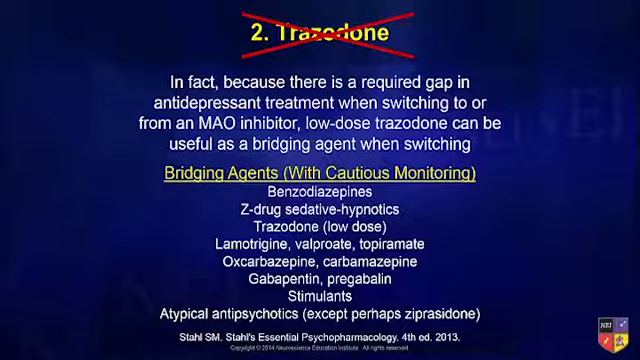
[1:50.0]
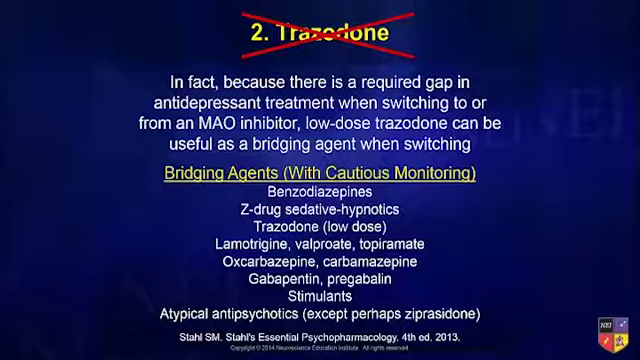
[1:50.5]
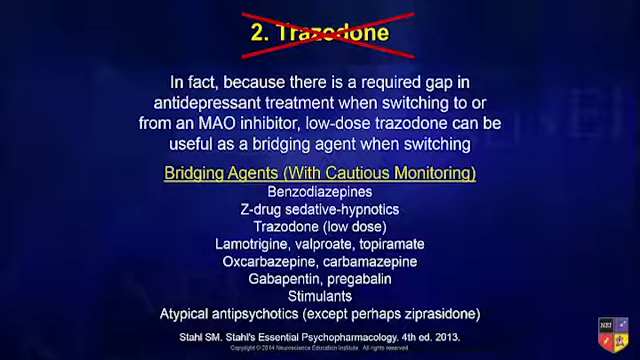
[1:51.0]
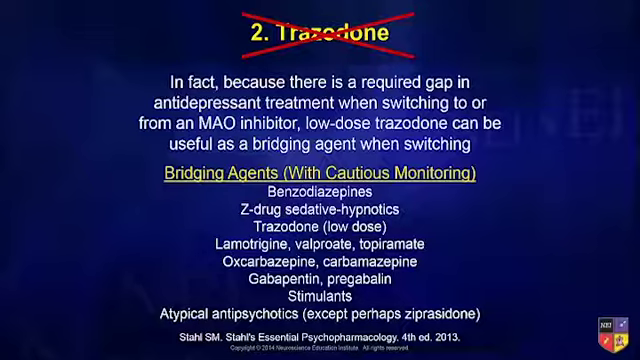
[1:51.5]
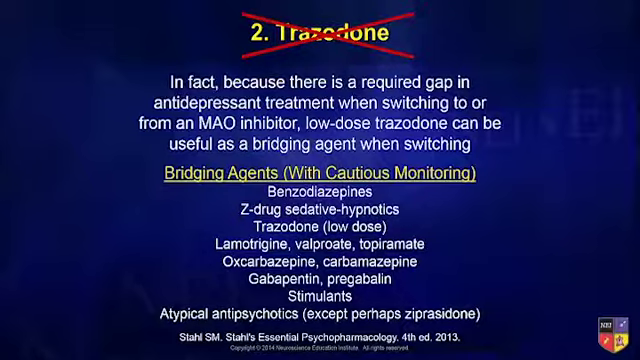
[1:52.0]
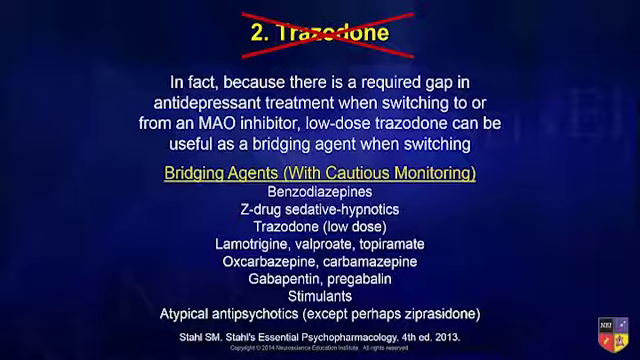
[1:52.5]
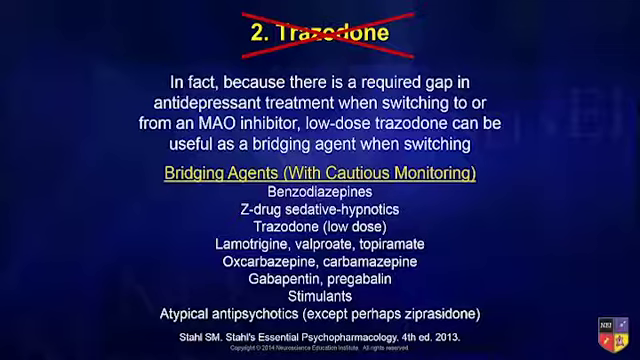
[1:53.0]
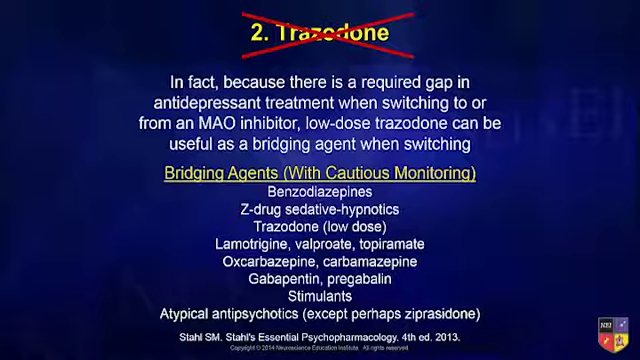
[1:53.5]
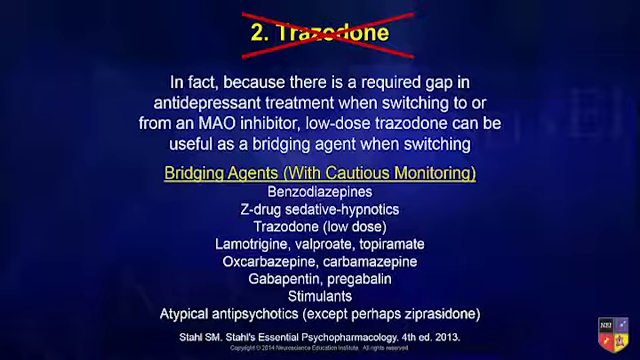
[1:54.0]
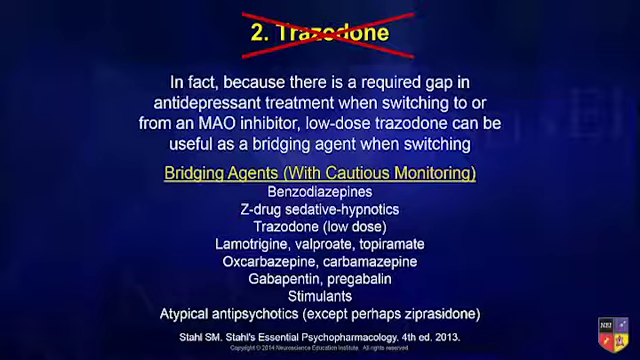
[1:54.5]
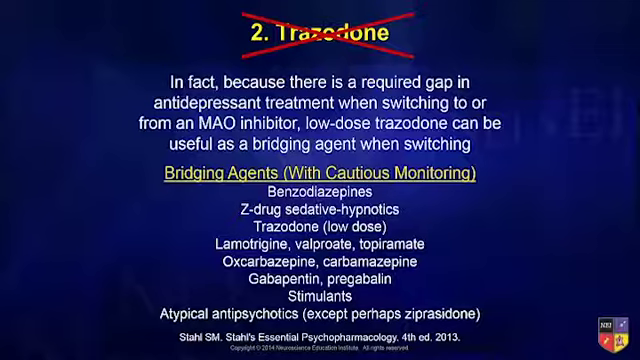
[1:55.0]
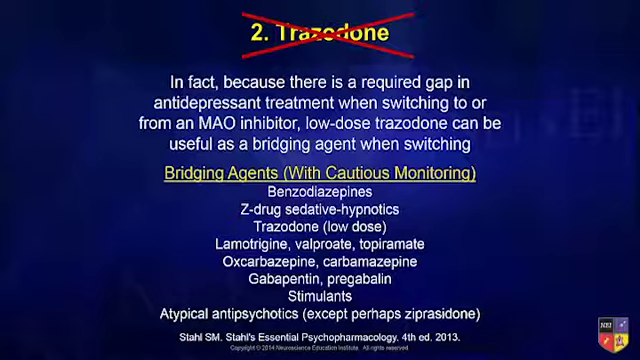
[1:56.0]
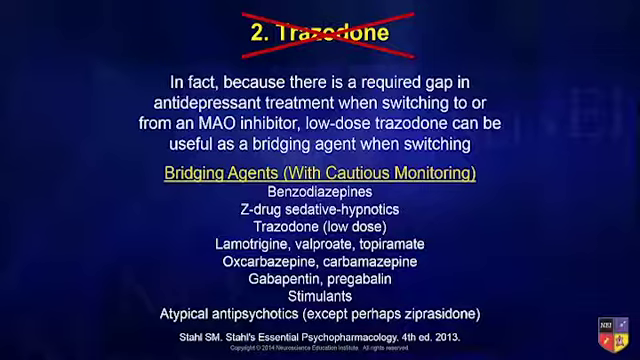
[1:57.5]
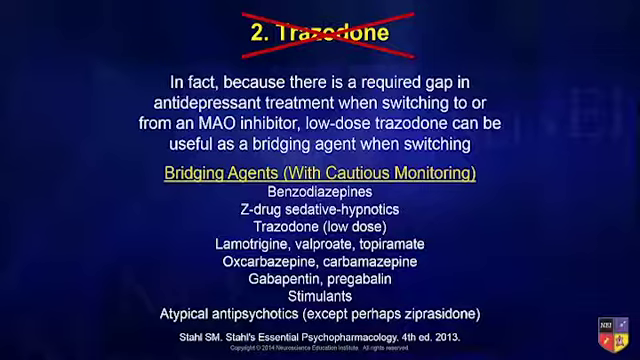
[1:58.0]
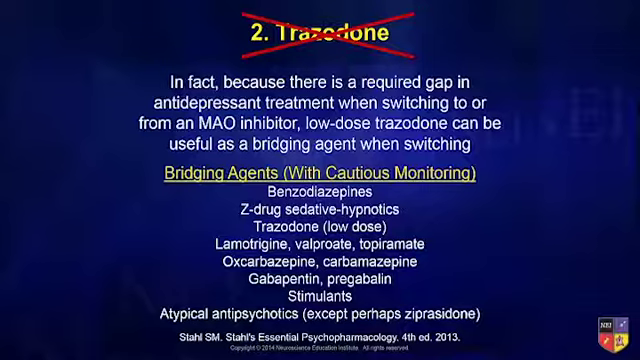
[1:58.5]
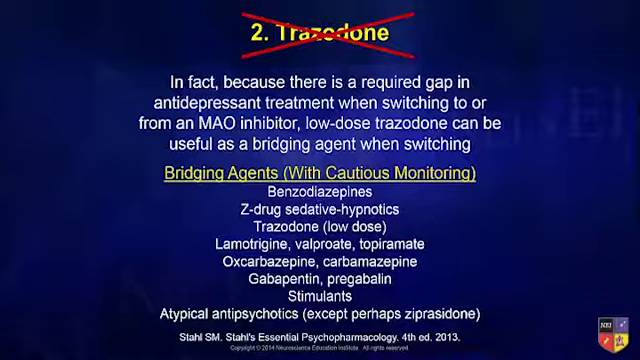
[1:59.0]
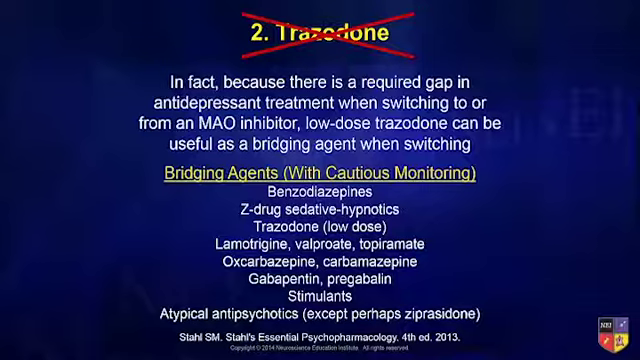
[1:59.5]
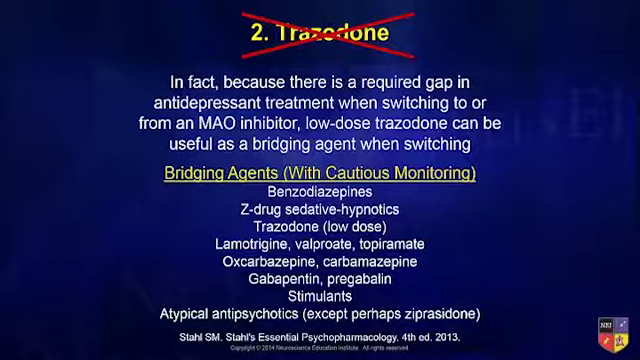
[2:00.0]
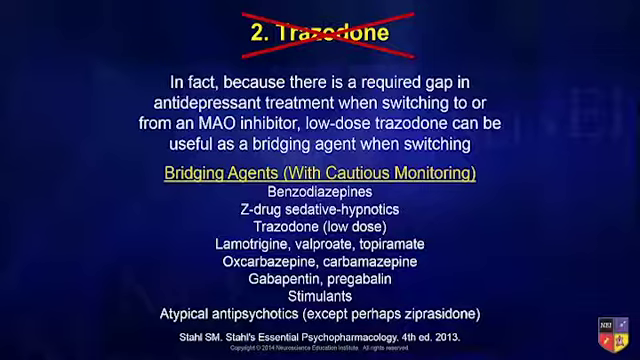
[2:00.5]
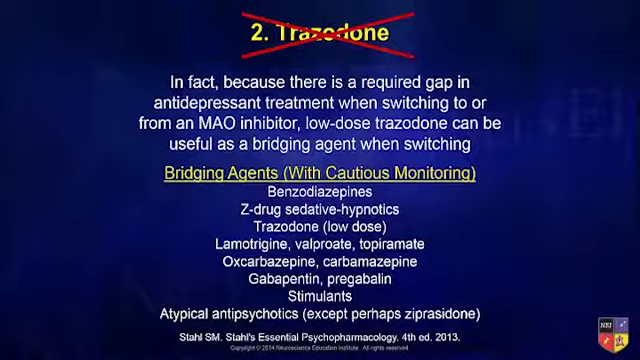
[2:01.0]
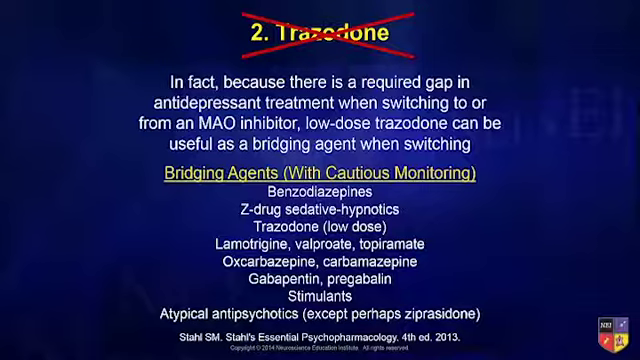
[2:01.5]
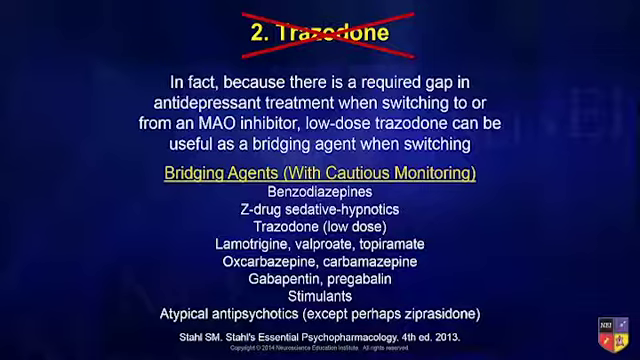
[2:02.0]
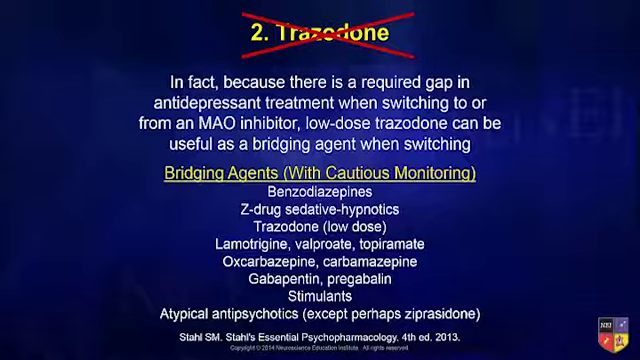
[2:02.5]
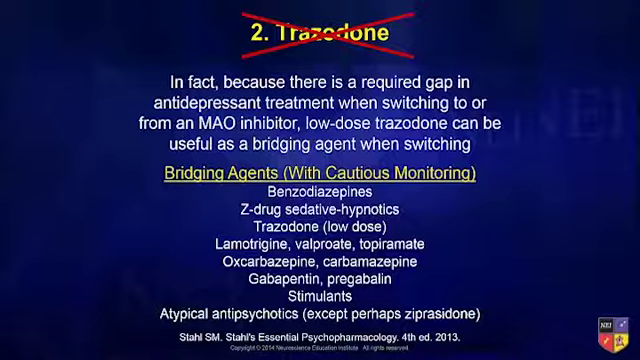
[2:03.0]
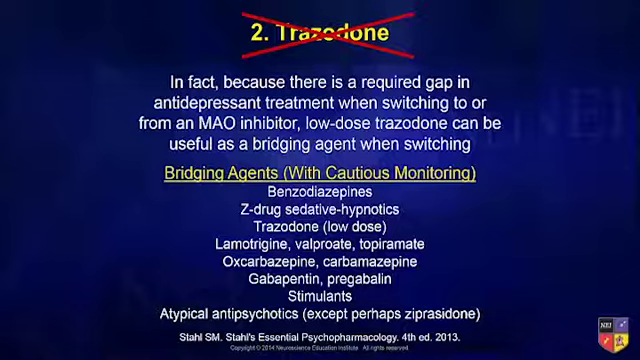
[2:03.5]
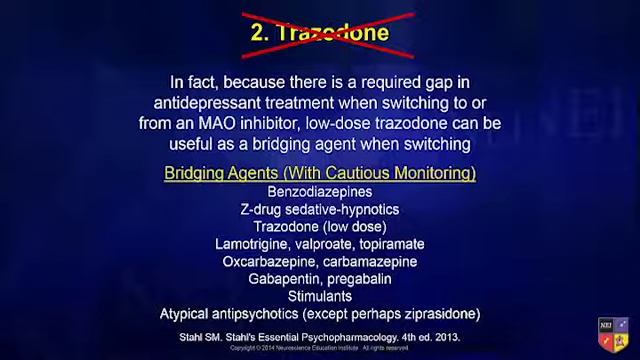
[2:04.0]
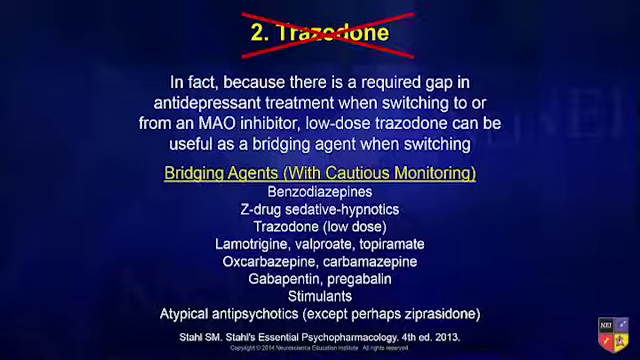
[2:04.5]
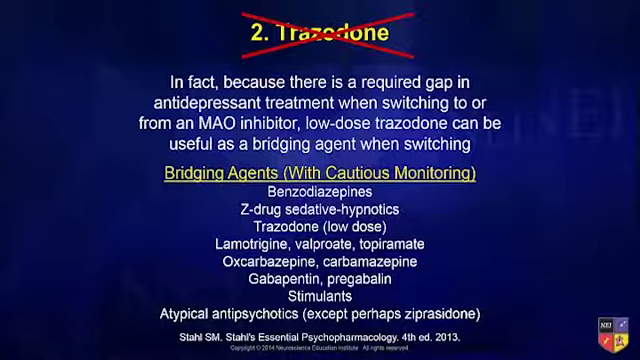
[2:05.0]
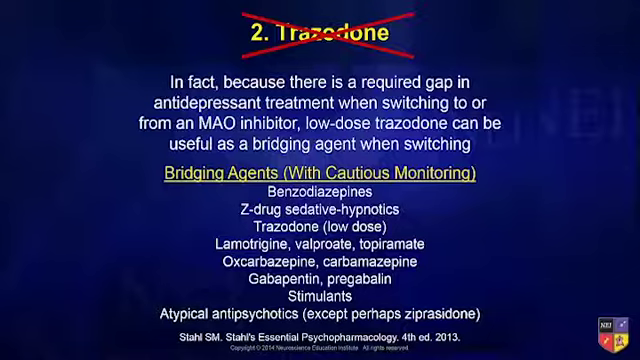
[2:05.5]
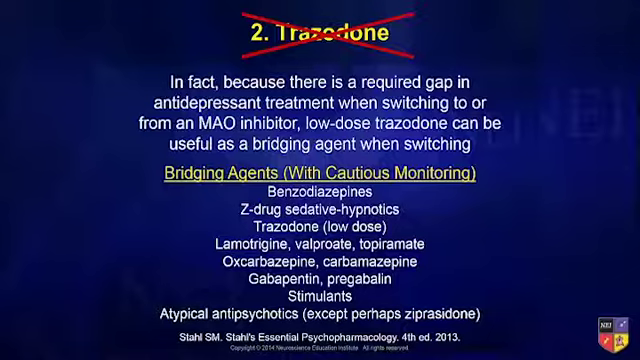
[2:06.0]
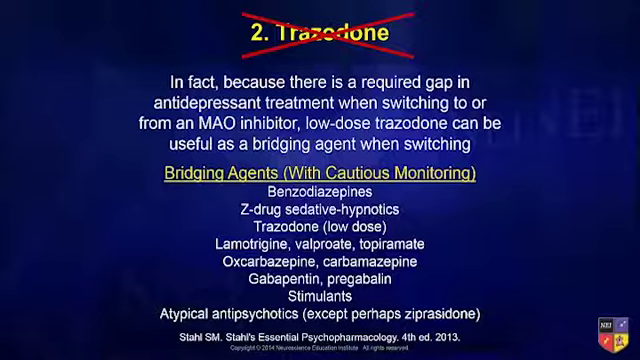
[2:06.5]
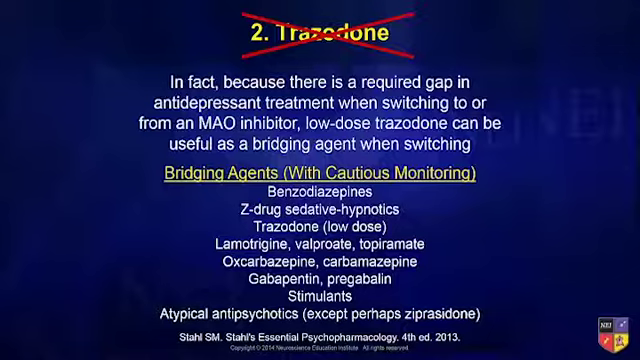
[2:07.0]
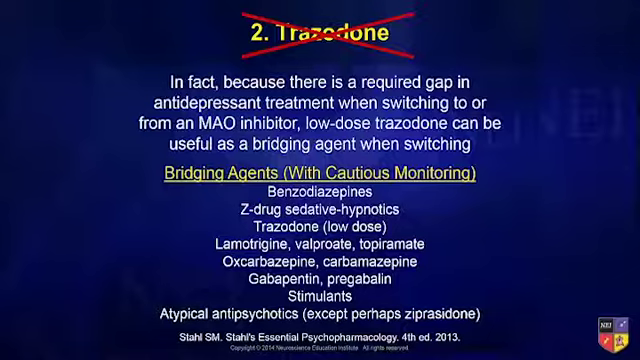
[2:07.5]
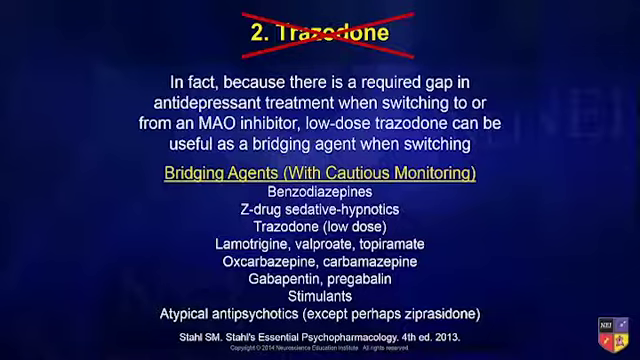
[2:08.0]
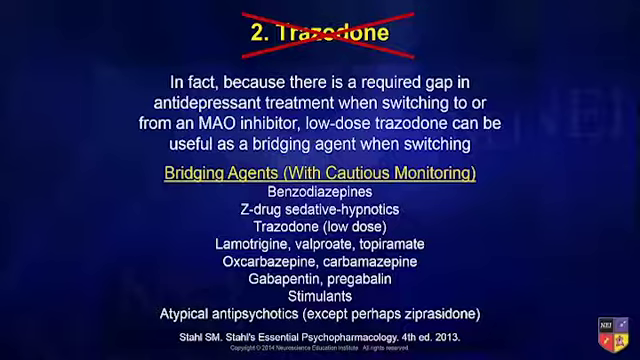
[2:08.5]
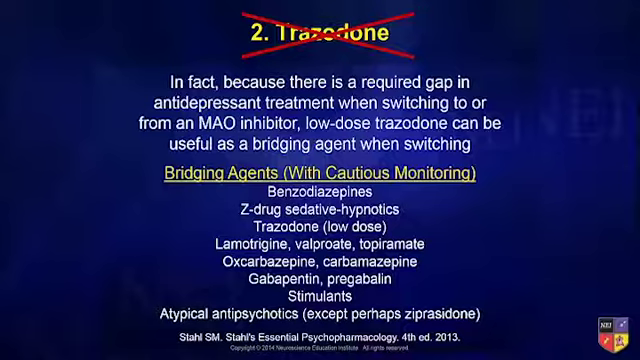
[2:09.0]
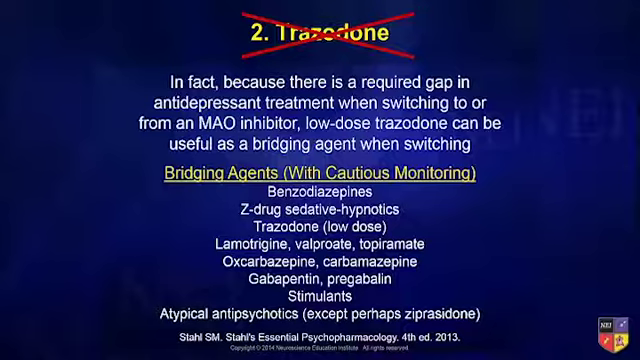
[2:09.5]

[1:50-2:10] The blue background shows the yellow "2 trazodone" at the top with a red cross through it, the white explanation underneath, the yellow "bridging agents" heading and several rows of white text listing the bridging agents, with a white citation at the very bottom of the screen. The image does not change throughout the shot: the white text continues to read "In fact, because there is a required gap in antidepressant treatment, when switching to or from an MAO inhibitor, low-dose trazodone can be useful as a bridging agent when switching." The list of bridging agents stays the same, displayed in 9 rows, with 12 bridging agents listed in total.